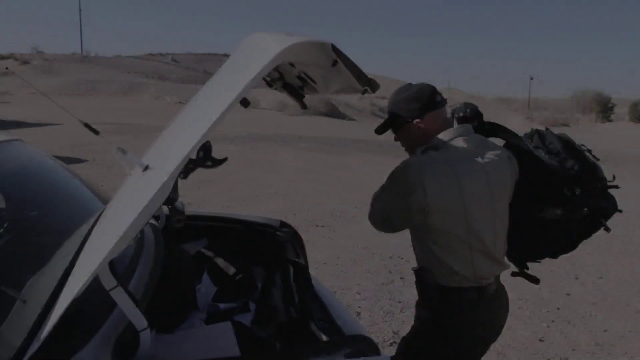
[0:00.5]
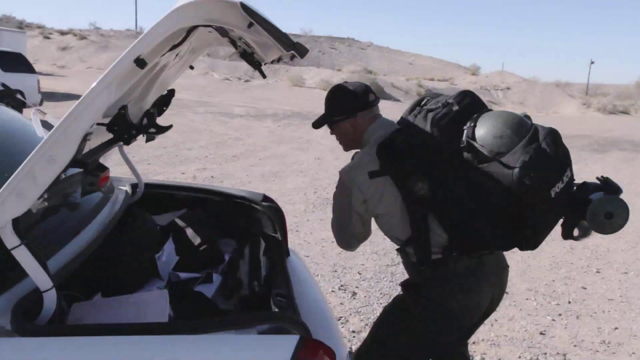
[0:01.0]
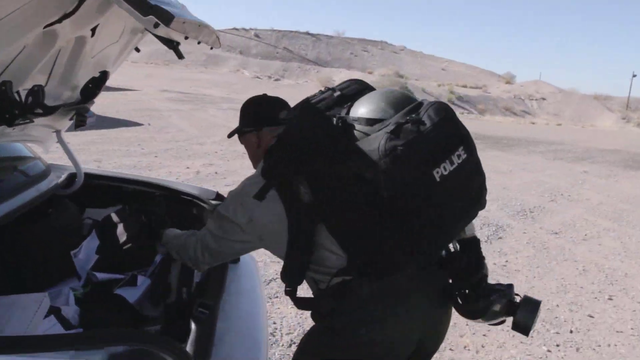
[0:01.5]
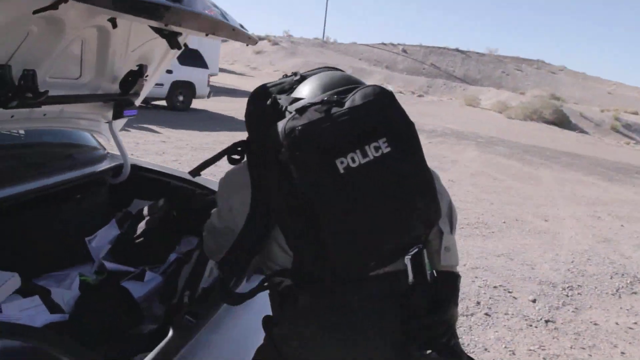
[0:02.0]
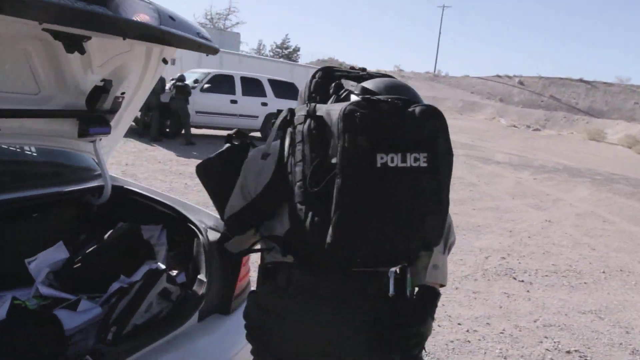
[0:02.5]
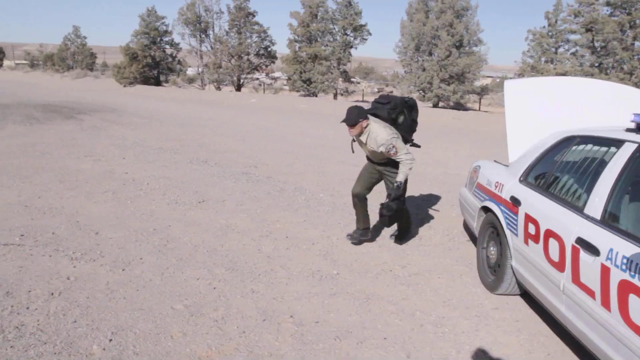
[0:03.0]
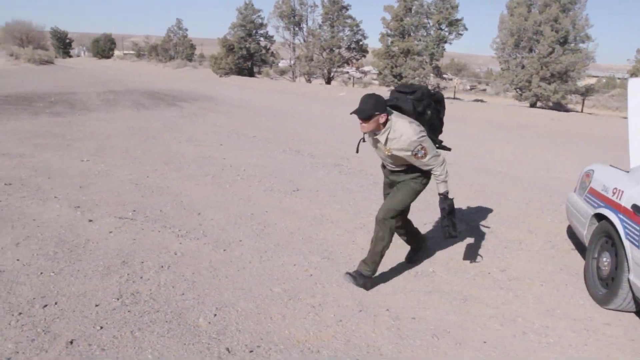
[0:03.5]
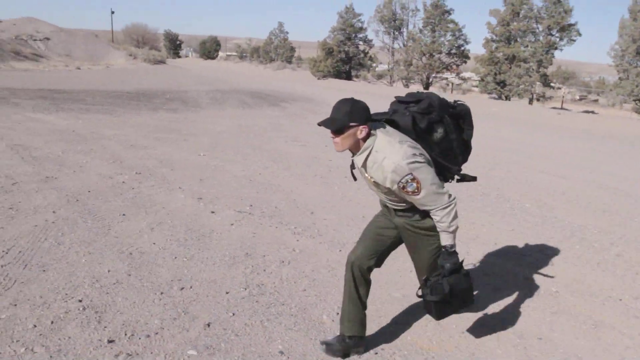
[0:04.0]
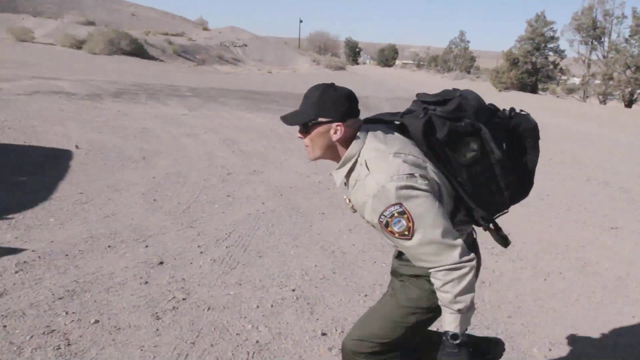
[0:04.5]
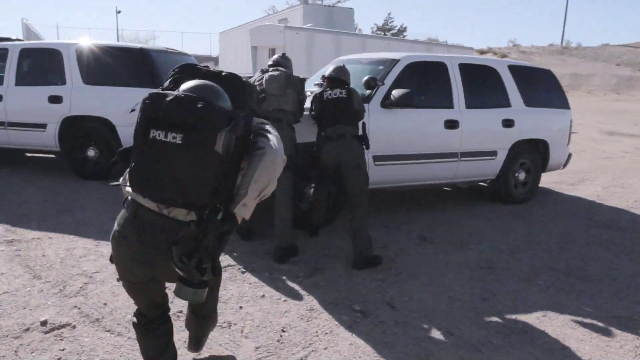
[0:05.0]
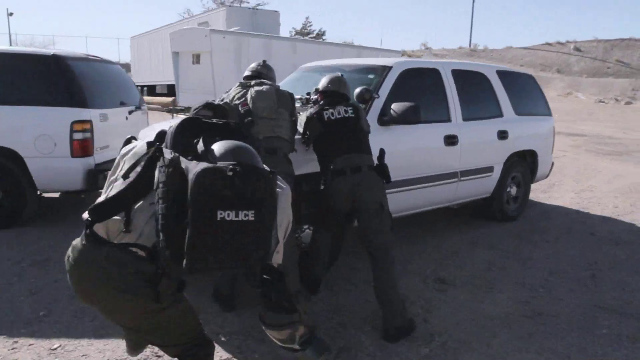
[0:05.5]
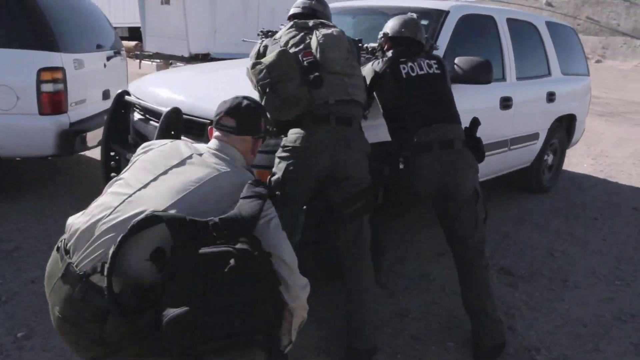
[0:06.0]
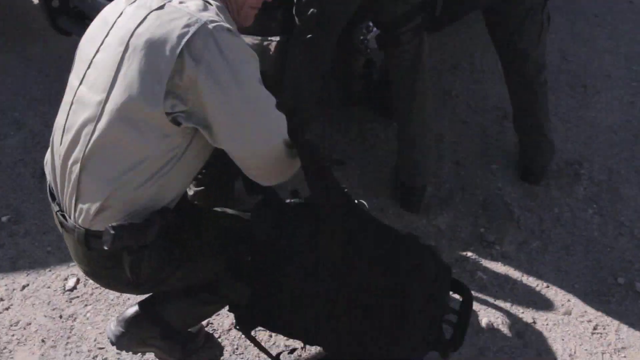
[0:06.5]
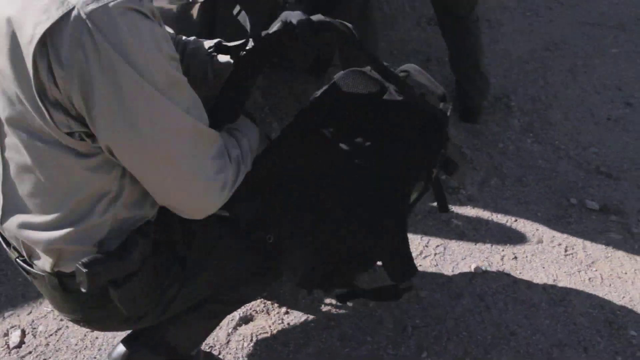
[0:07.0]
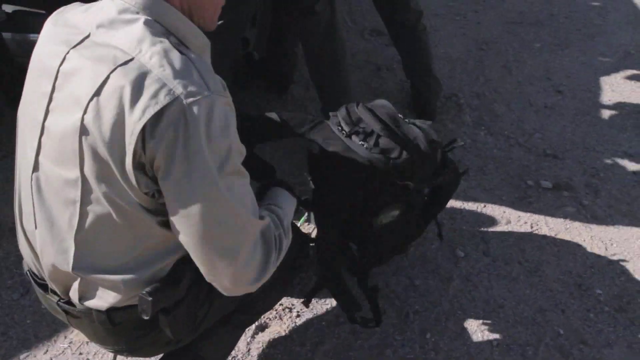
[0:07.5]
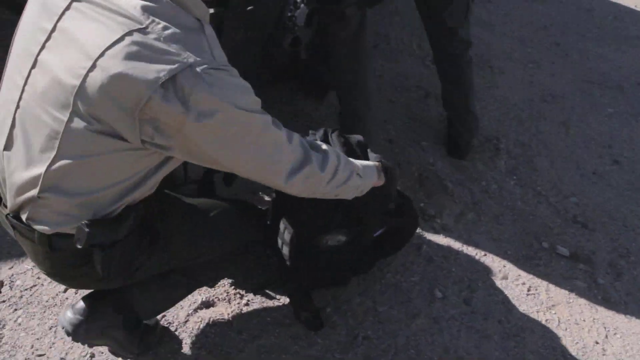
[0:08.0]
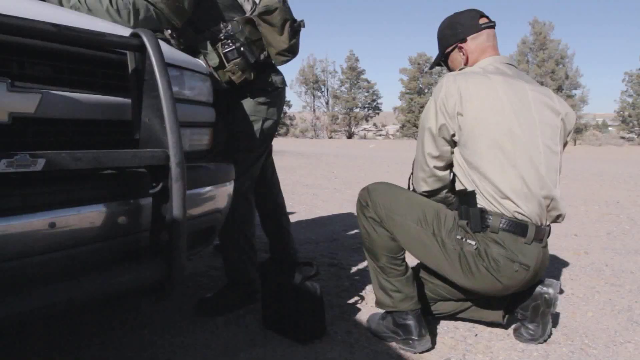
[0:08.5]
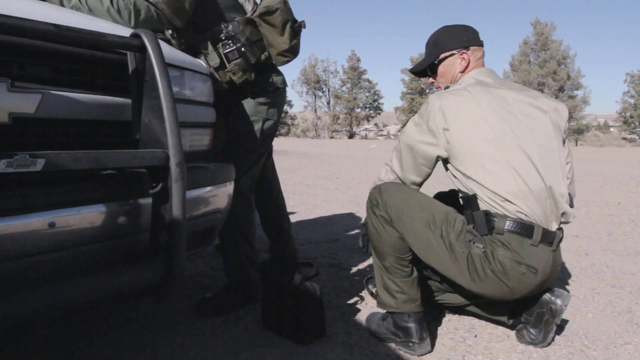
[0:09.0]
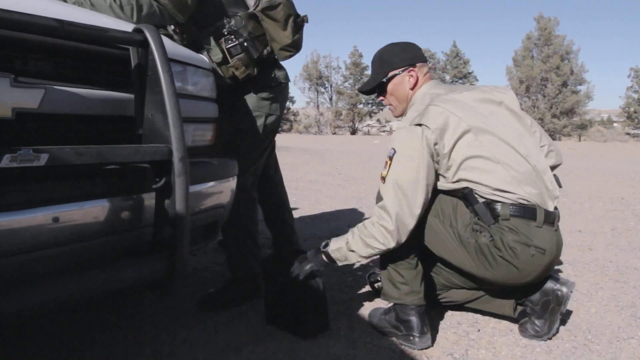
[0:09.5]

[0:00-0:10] A man is in the middle of the desert, taking stuff out of the trunk of his white sedan. He wears a heavily loaded black backpack with the word "police" written on the back. The man is a police officer, and he crouches as he runs forward behind two other police officers who are using a white police van as cover as they shoot ahead of them. The officer who ran forward takes his backpack off, takes cover behind the van as well, and lays the backpack on the floor.